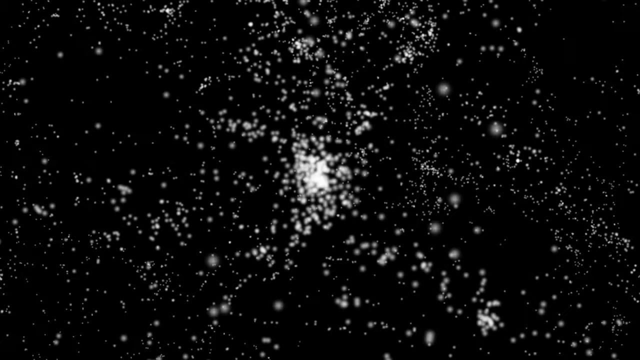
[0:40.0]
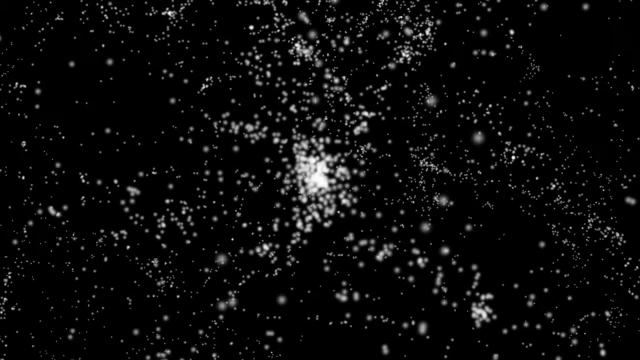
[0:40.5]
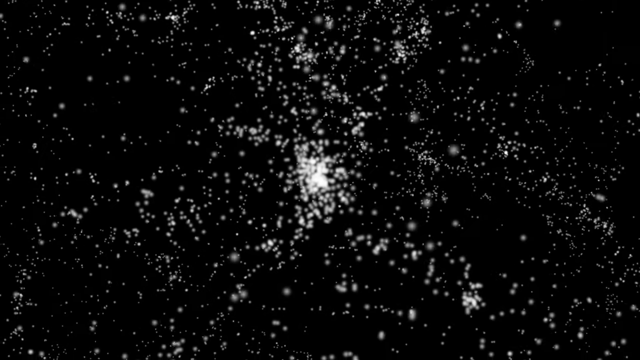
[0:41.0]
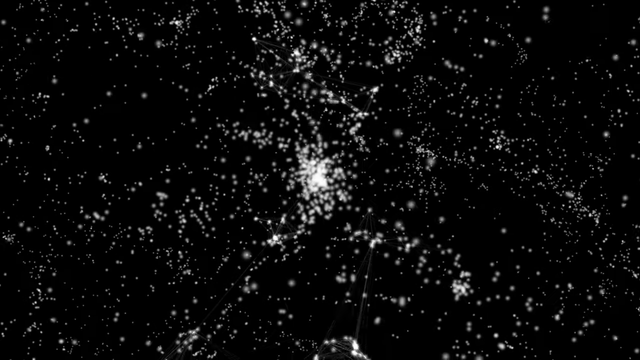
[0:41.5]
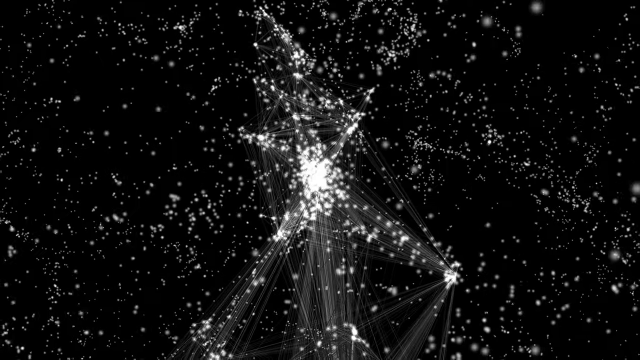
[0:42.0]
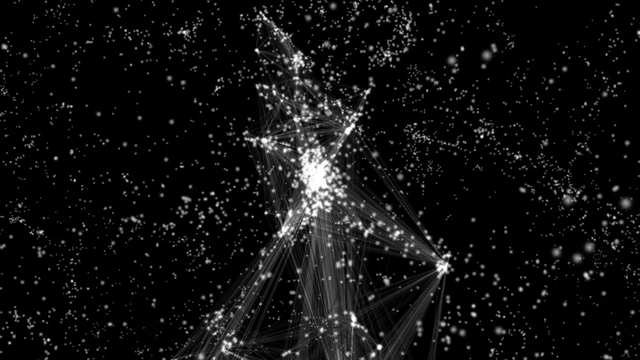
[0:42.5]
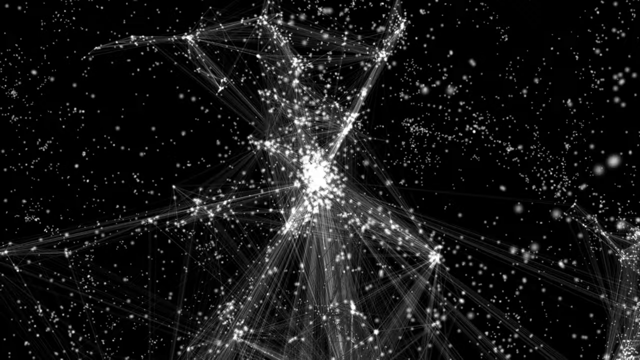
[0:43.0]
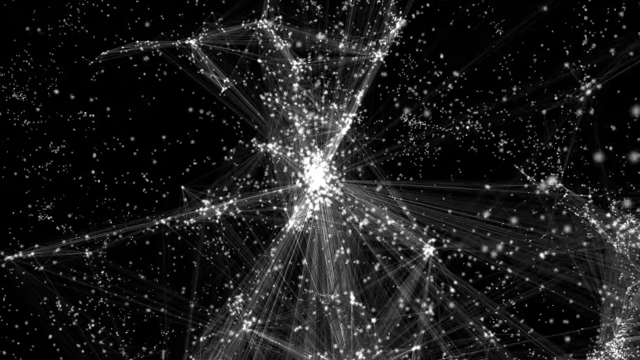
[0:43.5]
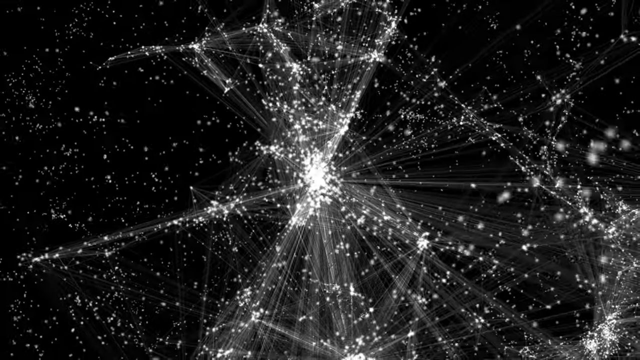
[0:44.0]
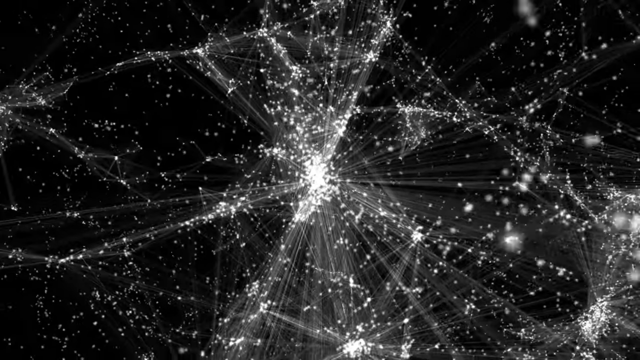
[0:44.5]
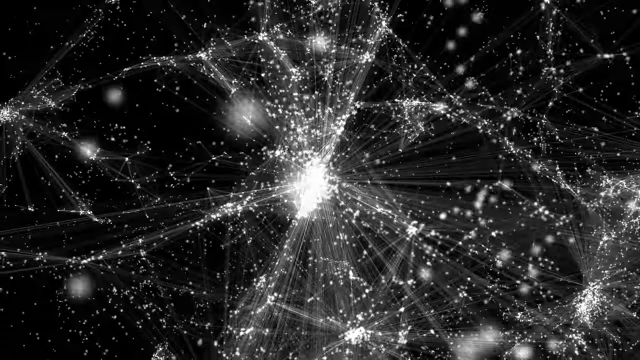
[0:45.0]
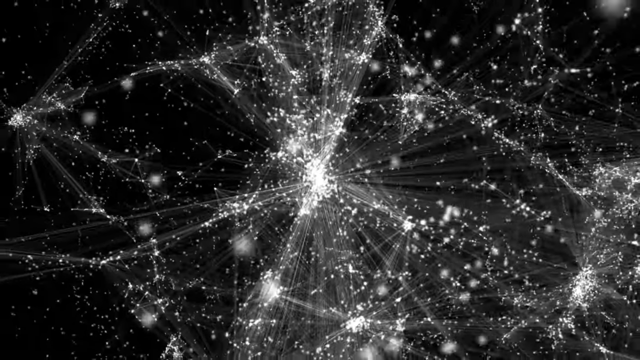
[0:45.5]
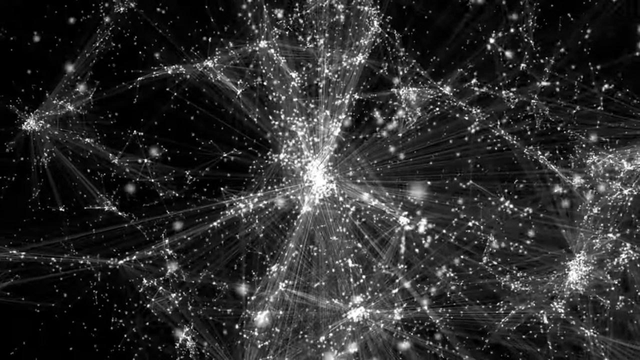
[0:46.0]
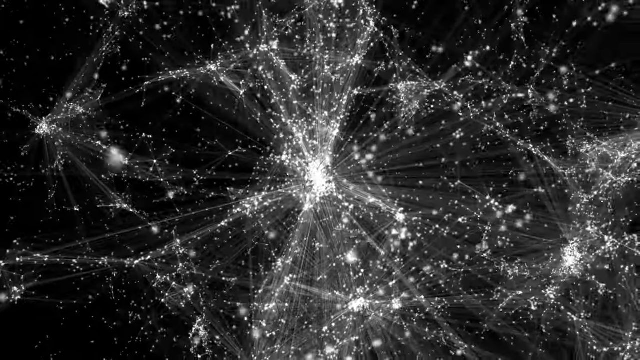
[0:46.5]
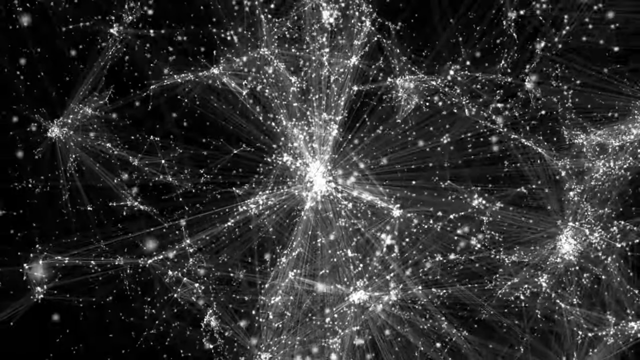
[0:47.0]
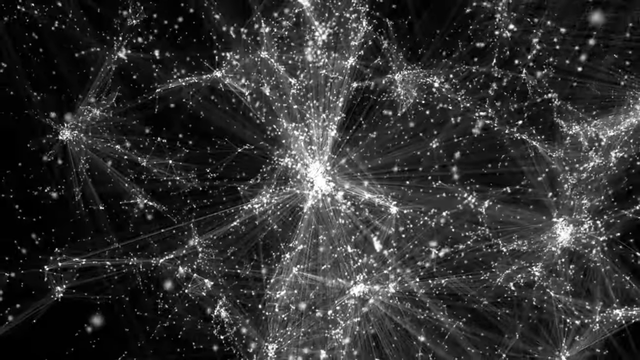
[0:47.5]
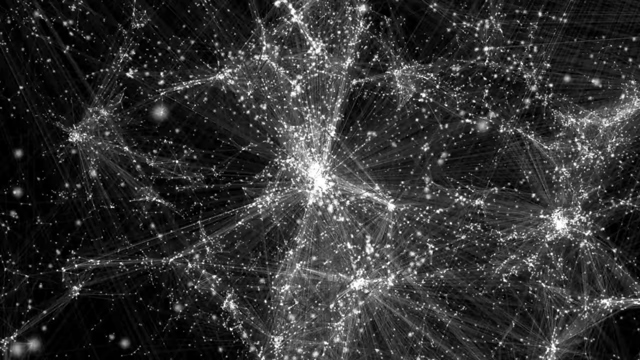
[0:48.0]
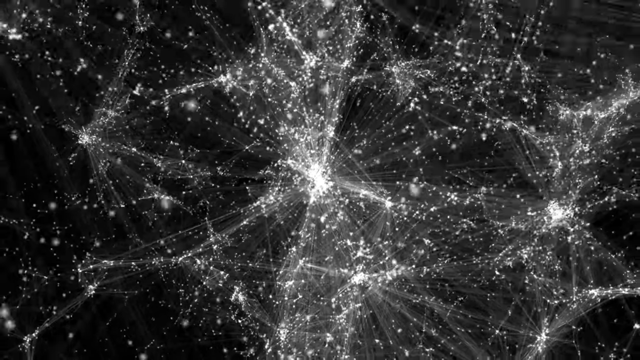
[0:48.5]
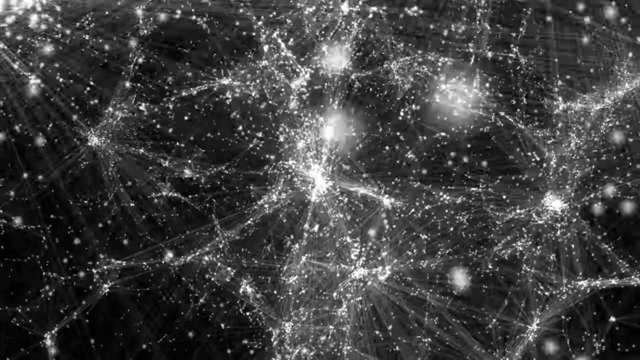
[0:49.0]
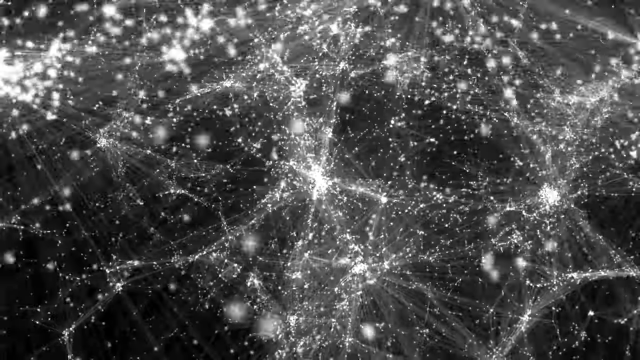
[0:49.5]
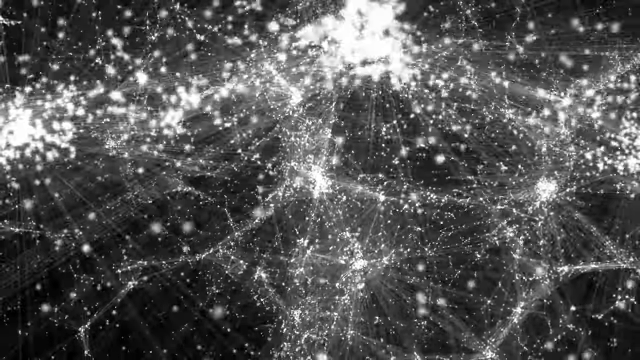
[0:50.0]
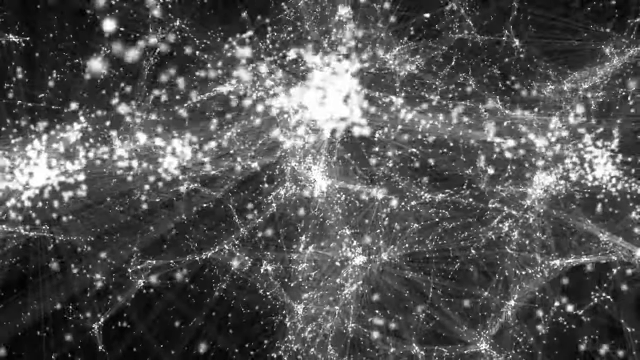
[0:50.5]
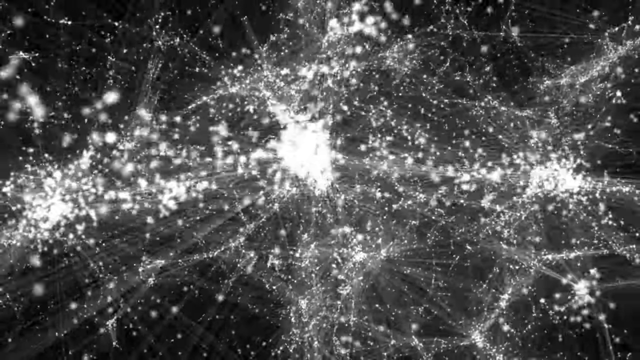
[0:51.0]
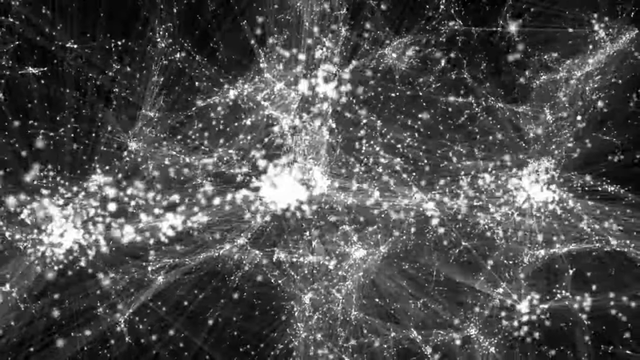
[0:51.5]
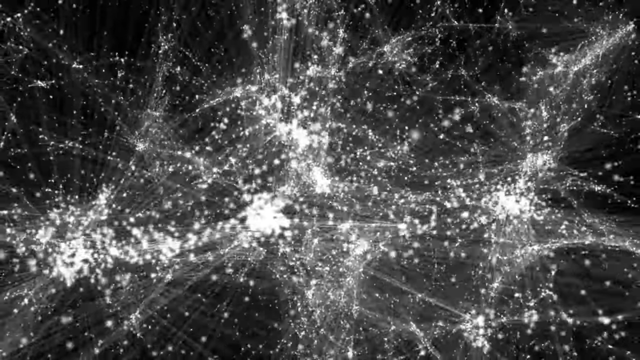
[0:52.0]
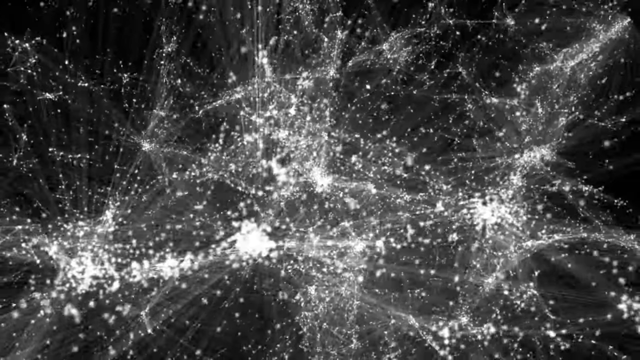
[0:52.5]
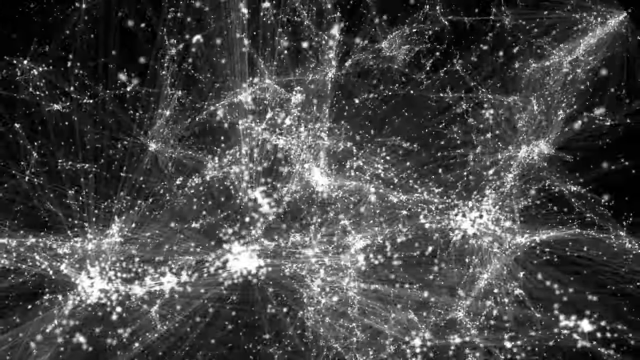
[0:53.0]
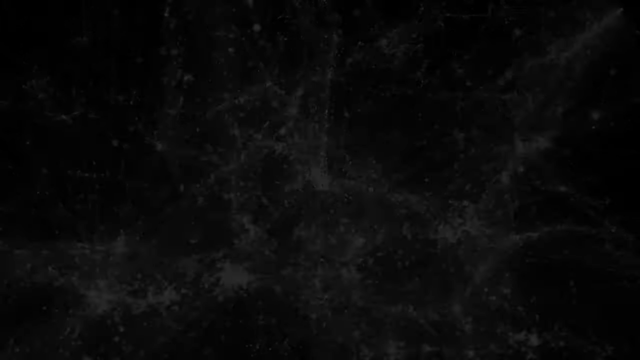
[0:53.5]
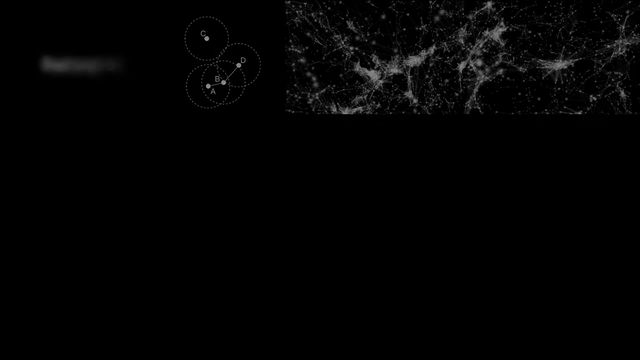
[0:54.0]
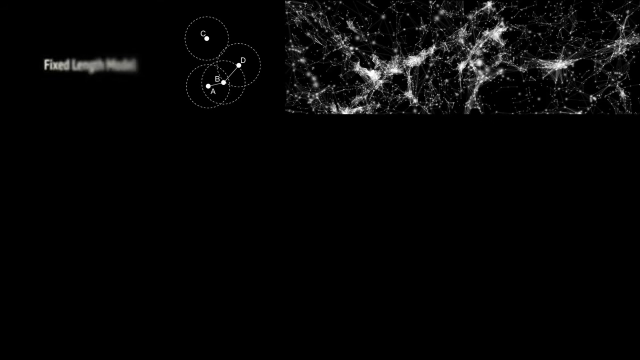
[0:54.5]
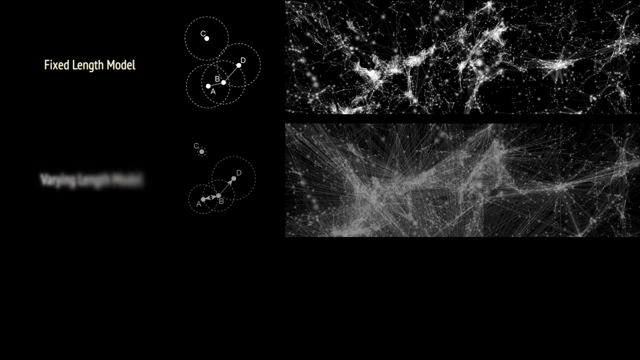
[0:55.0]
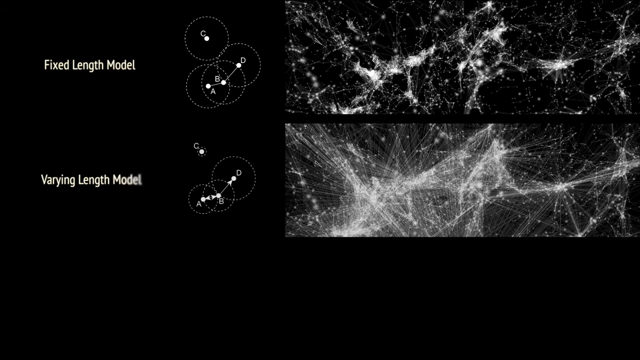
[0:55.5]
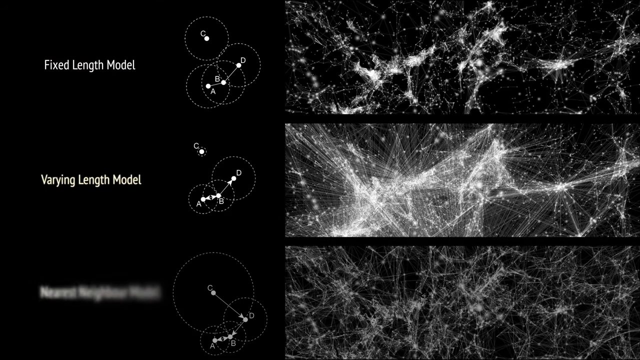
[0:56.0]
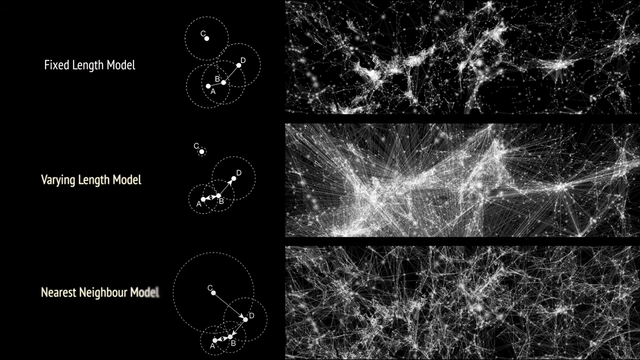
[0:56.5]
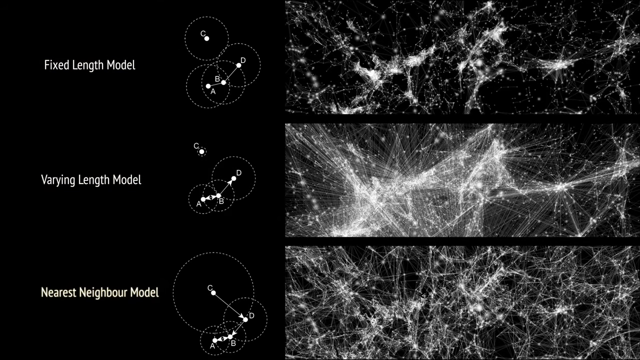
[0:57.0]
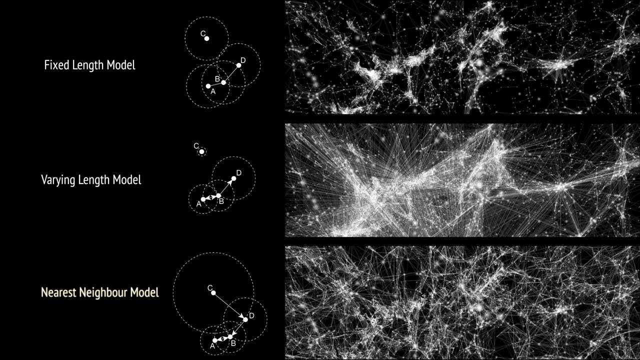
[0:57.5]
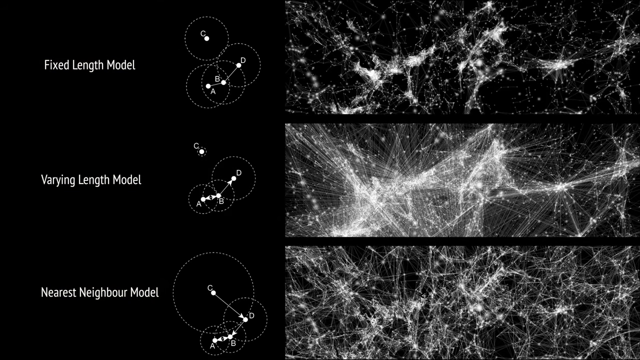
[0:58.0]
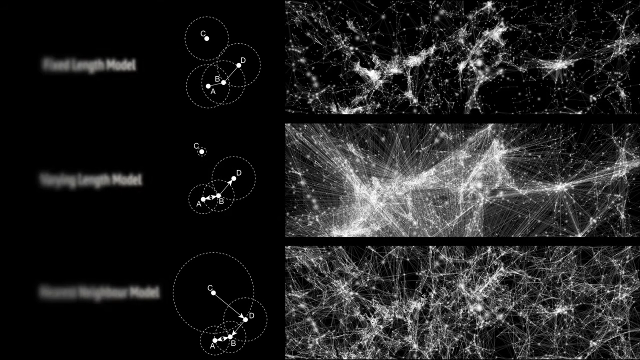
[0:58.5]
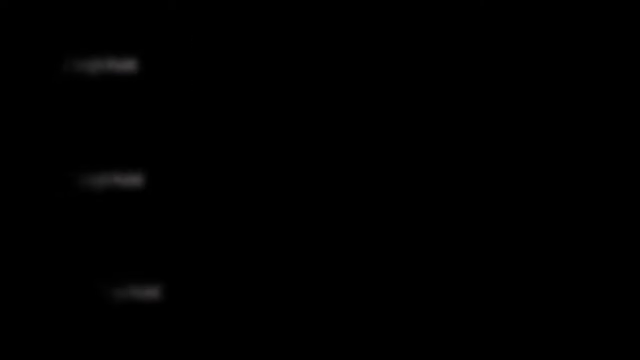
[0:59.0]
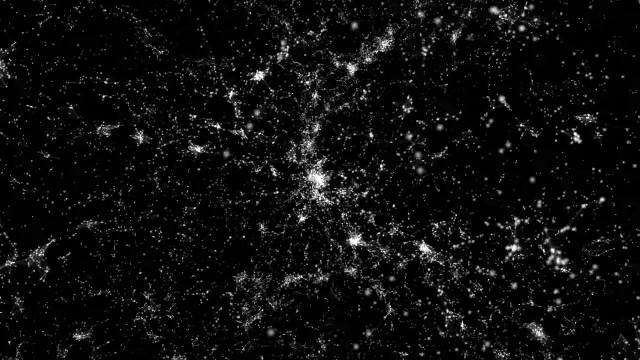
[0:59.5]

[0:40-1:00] A background is covered with white dots, some of them clustered in the center, with a glowing effect behind some of the dots. The camera pans out somewhat, revealing more white dots in a cluster joined by many connected white lines; they slowly pop up on the screen, and the clusters get larger and brighter. As the camera continues to move out, more white clusters come in. It then fades to a black background with white text on the left reading "fixed length model," "varying length model," and "nearest neighbor model," showing three different models, along with various circles labeled C, D, B, and A from top to bottom. The text slowly goes off the screen with the graphics, and the view returns to a black background with many white dots that seem to be circulating.